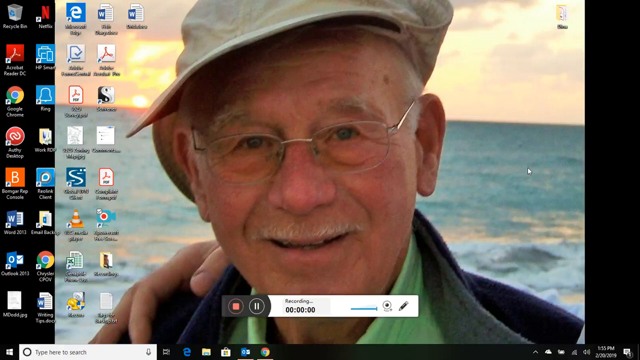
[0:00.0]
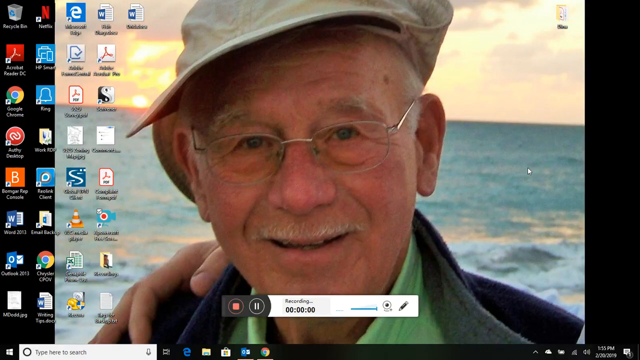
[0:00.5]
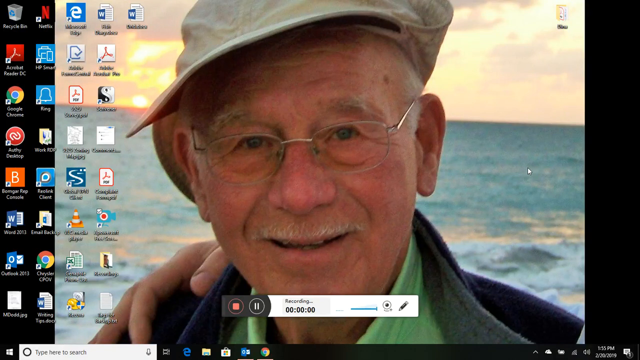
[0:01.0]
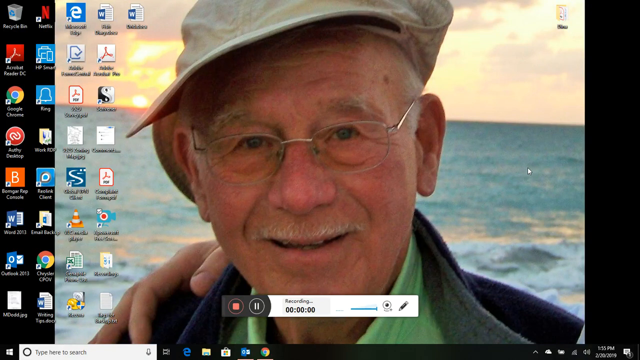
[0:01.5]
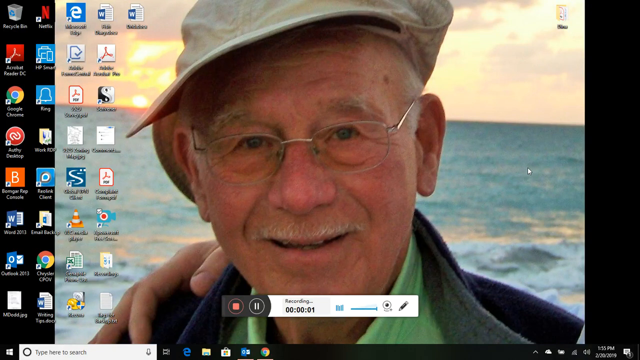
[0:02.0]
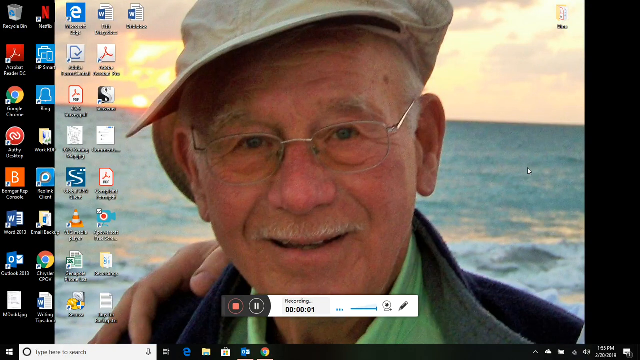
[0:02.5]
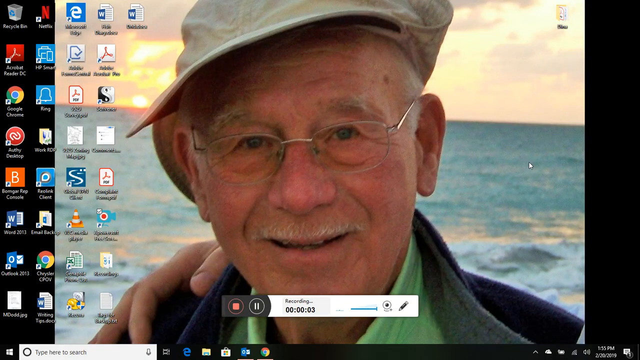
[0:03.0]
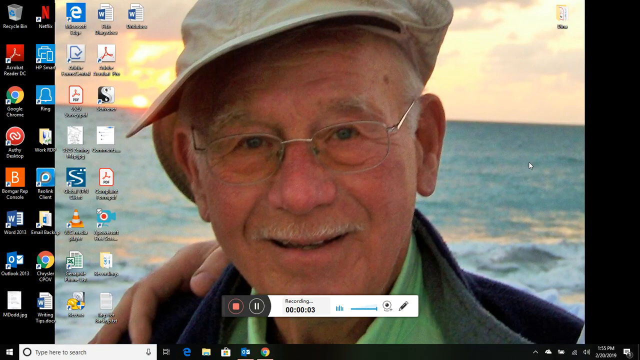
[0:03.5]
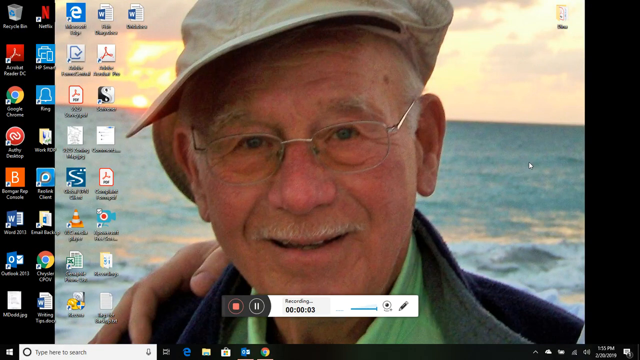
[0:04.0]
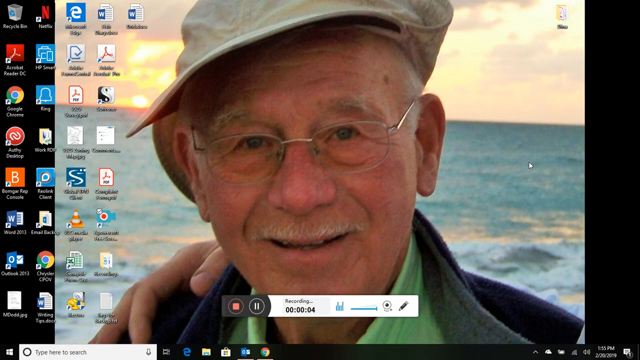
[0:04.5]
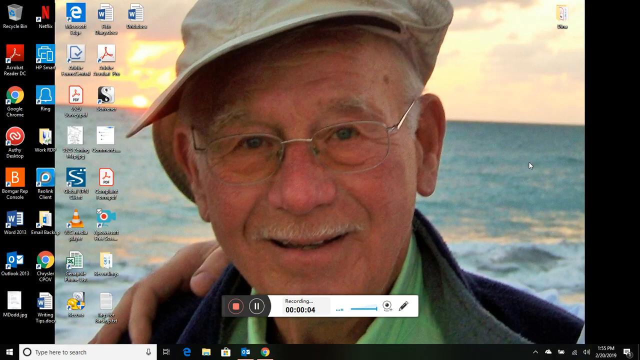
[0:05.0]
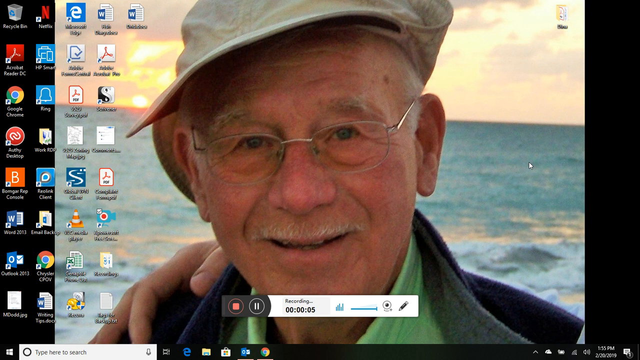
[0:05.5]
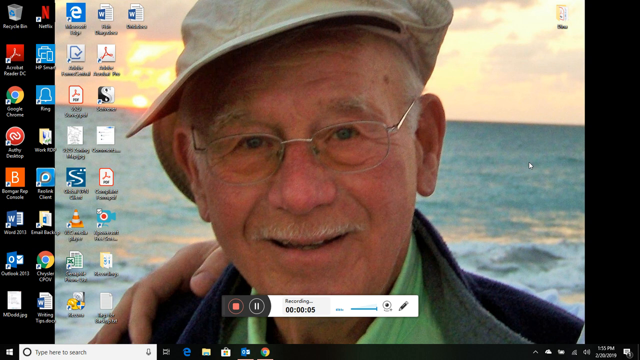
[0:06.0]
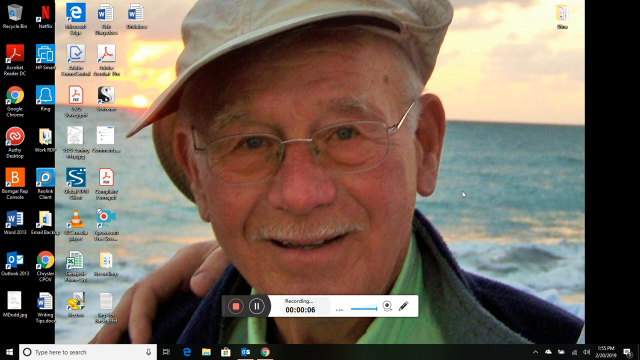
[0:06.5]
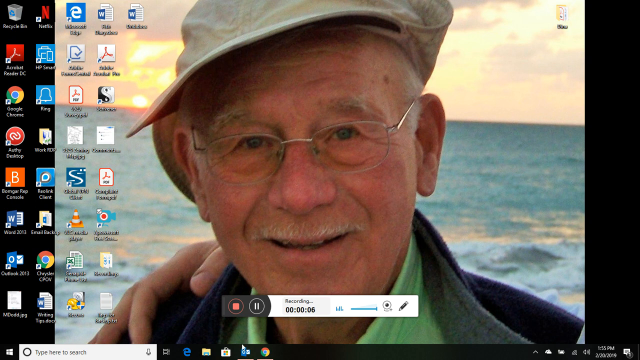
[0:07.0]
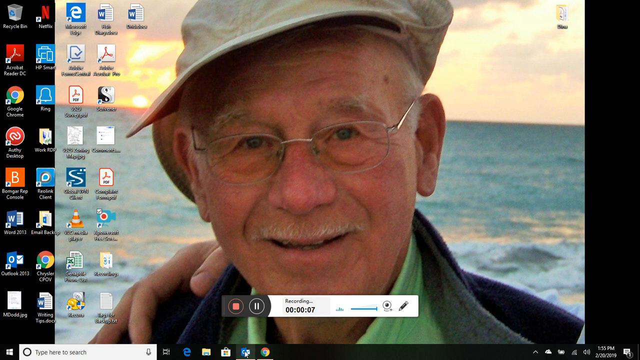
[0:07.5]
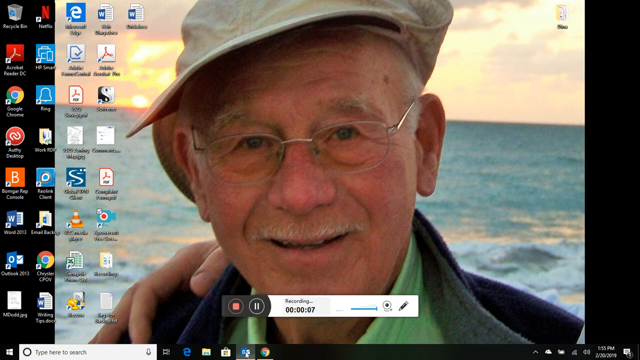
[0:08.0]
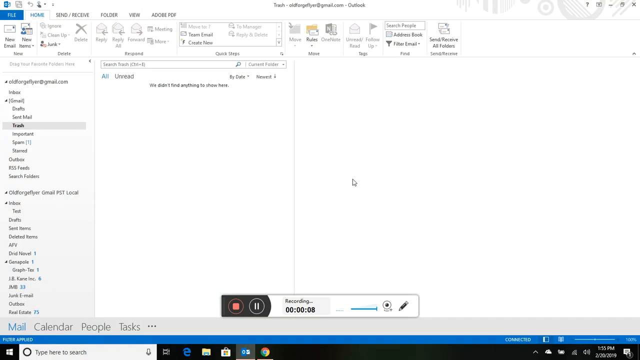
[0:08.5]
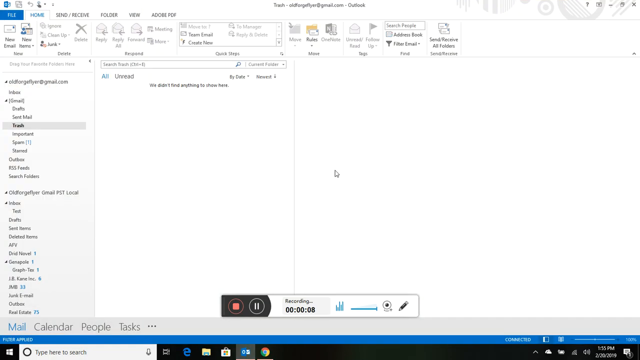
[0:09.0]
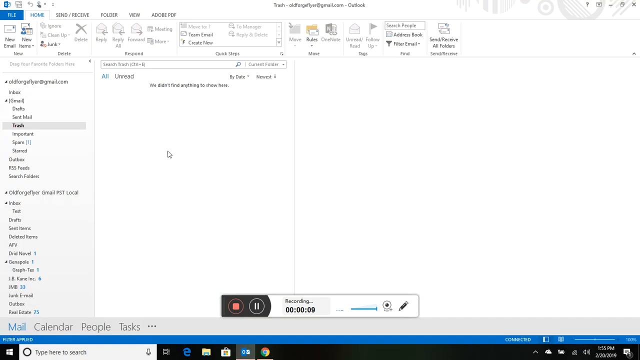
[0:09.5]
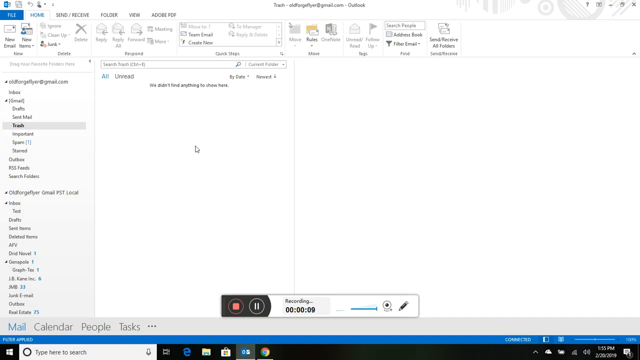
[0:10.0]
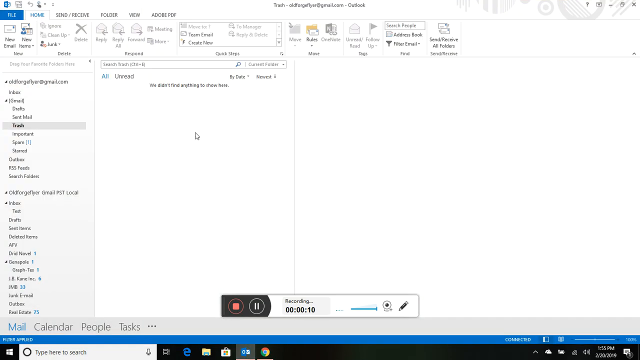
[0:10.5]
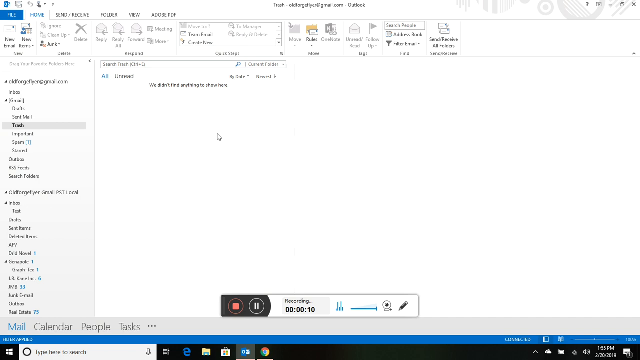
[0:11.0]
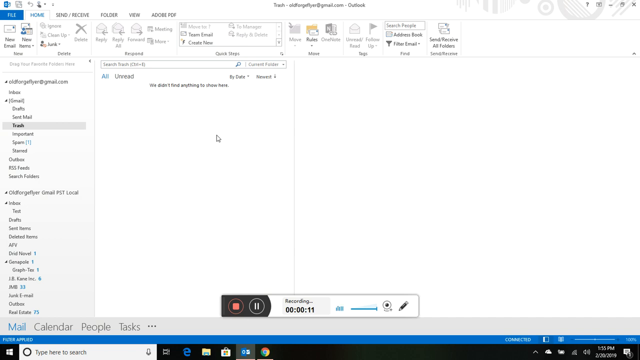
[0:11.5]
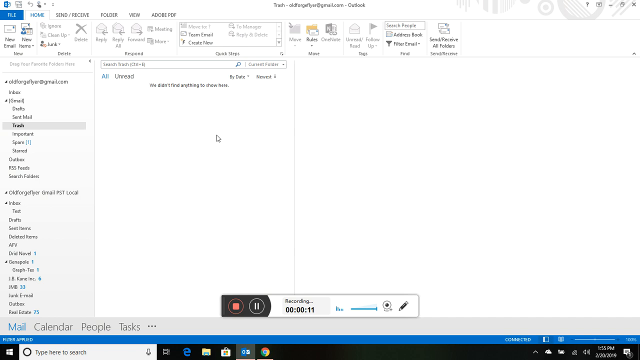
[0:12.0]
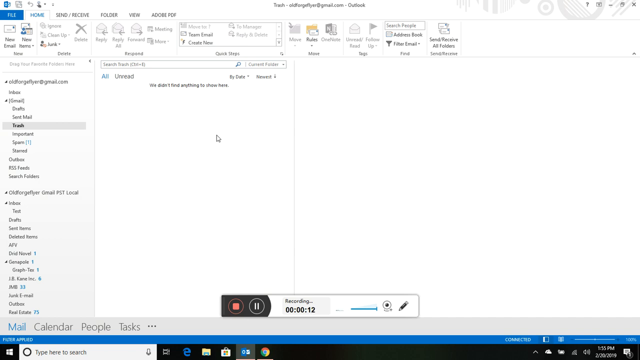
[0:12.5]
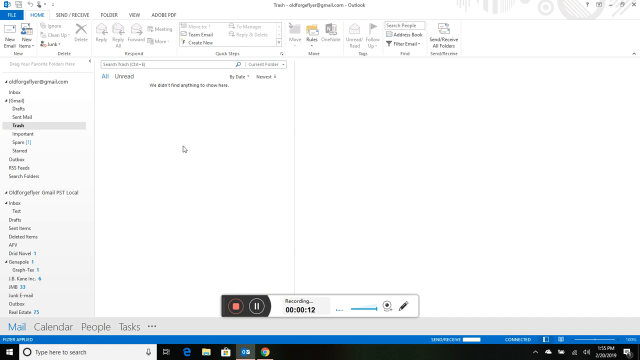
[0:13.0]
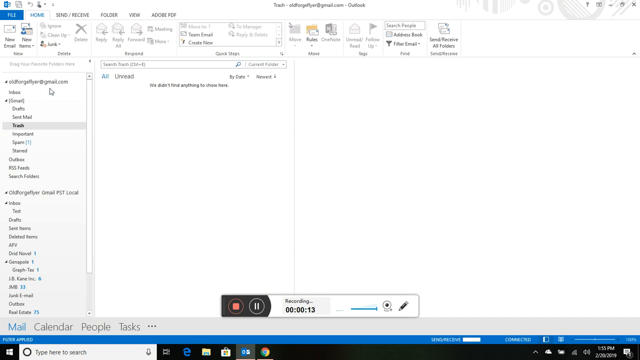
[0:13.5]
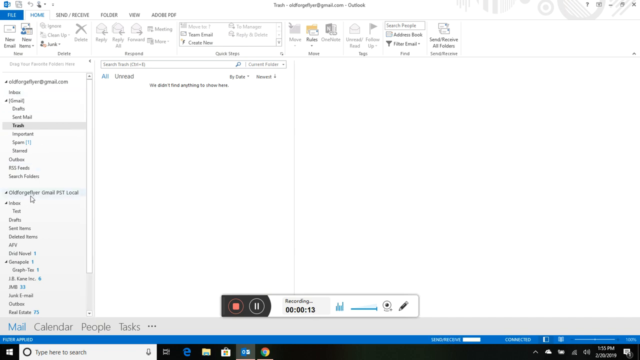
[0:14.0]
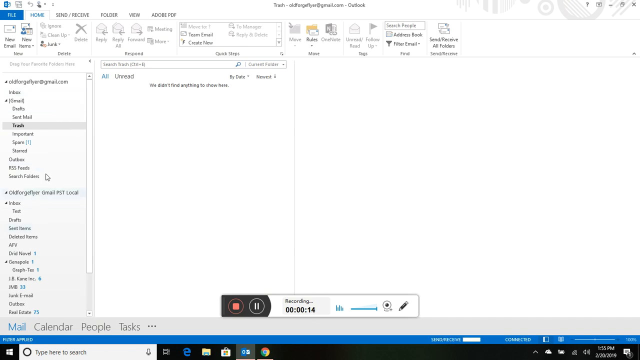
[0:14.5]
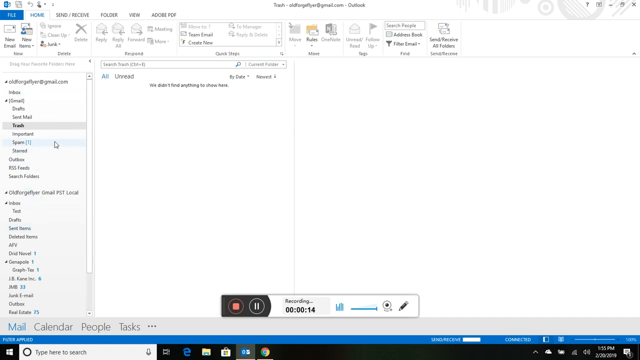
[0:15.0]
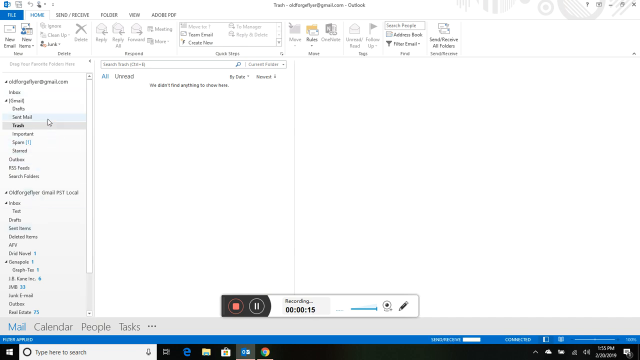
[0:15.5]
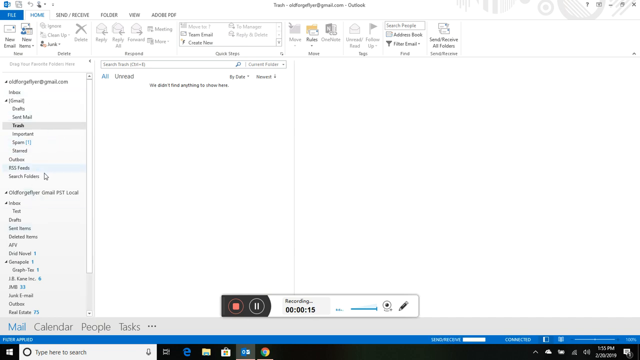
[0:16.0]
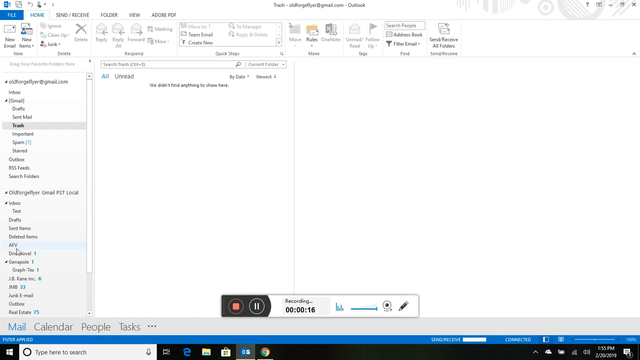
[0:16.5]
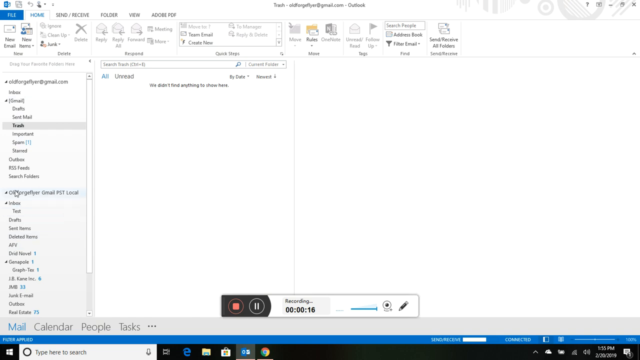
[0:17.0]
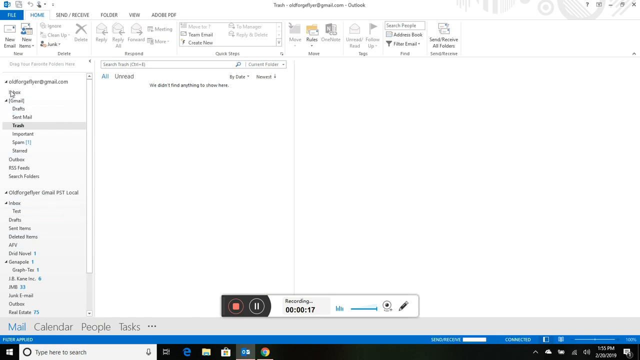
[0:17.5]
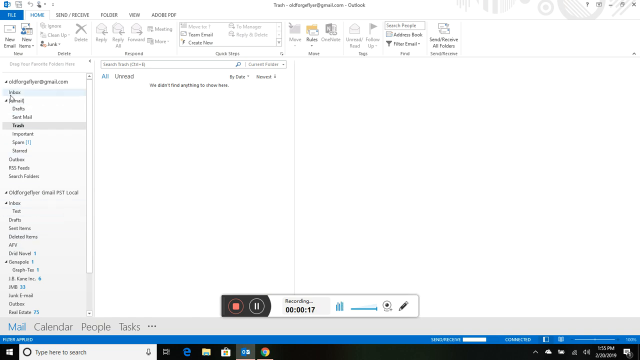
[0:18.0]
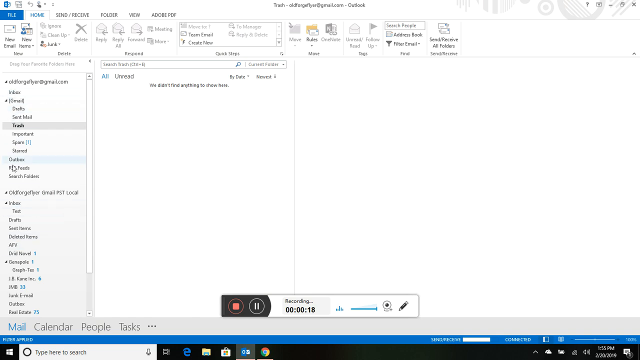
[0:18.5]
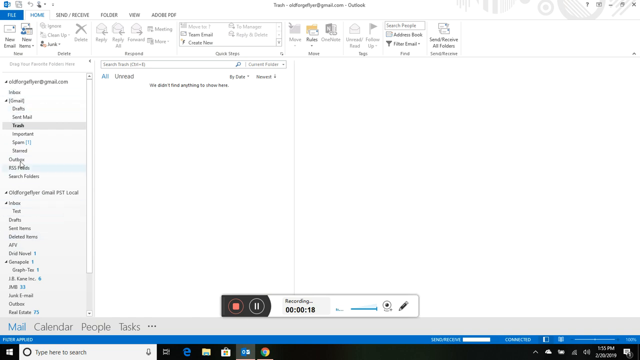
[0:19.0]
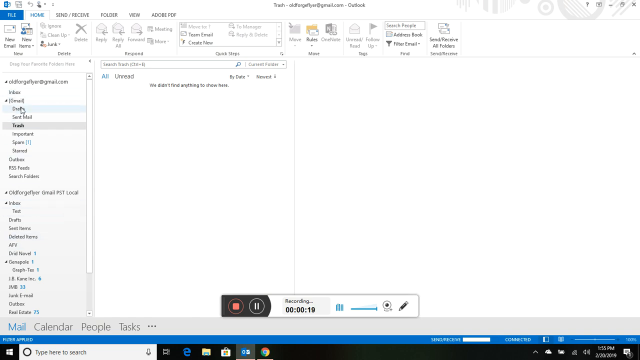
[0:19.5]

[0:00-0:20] Someone is using a computer, apparently exploring an application, and comes back to what seems to be the home screen. The computer screen has a wallpaper showing an old man, apparently in his 60s.